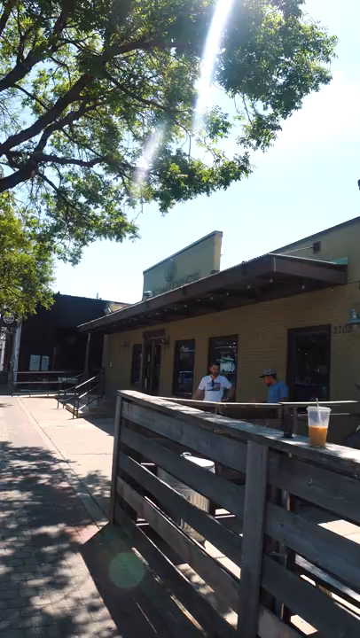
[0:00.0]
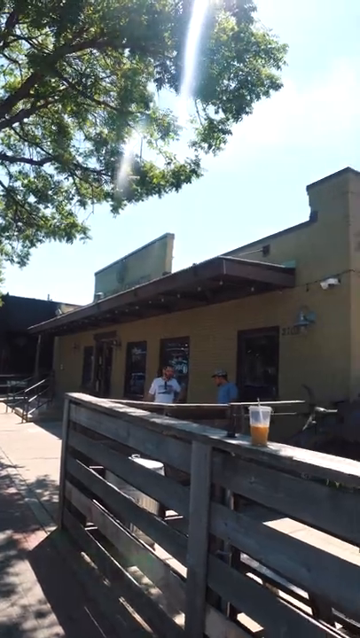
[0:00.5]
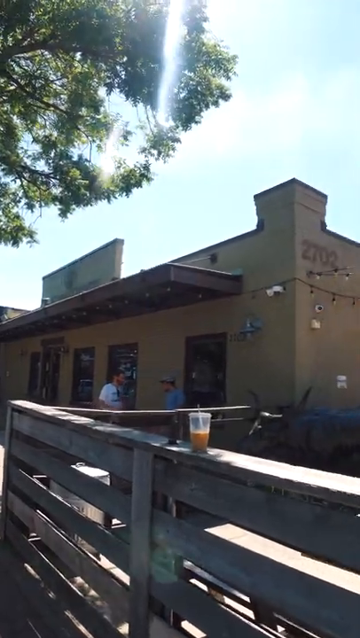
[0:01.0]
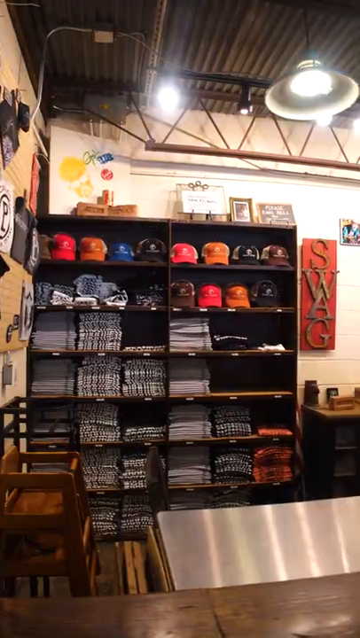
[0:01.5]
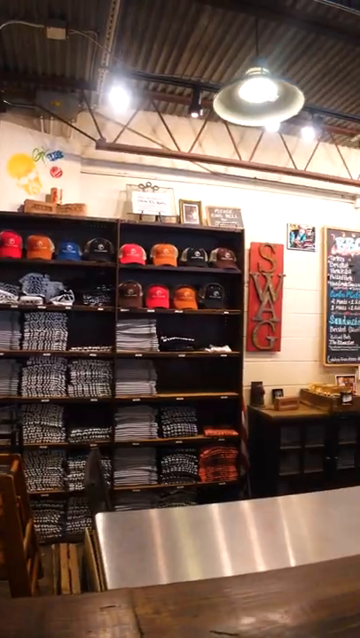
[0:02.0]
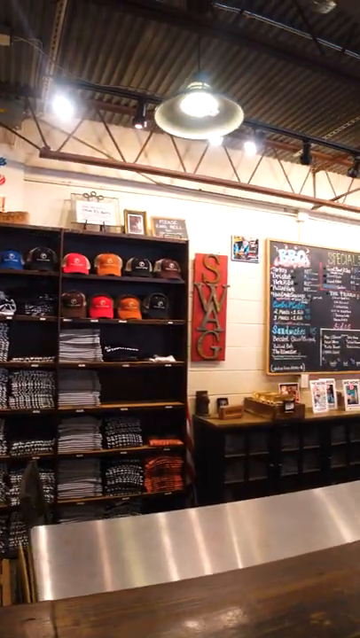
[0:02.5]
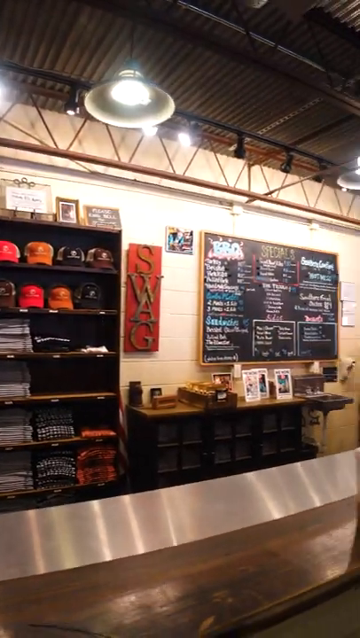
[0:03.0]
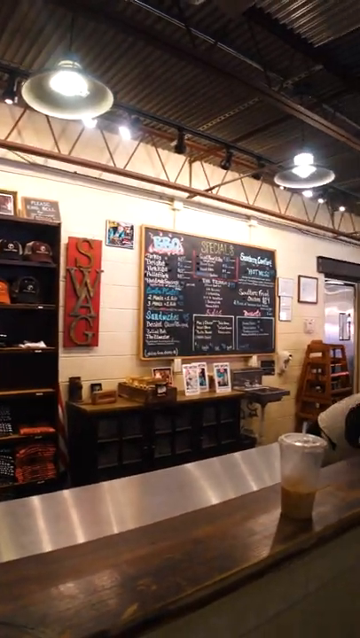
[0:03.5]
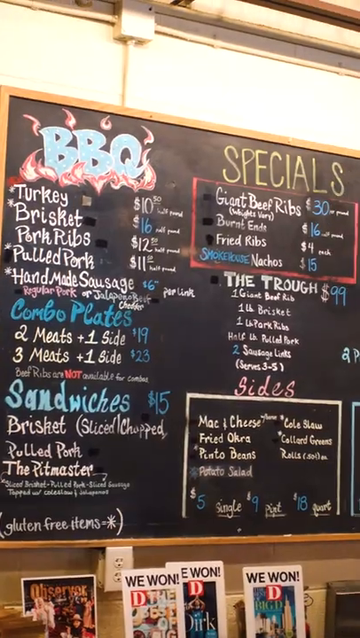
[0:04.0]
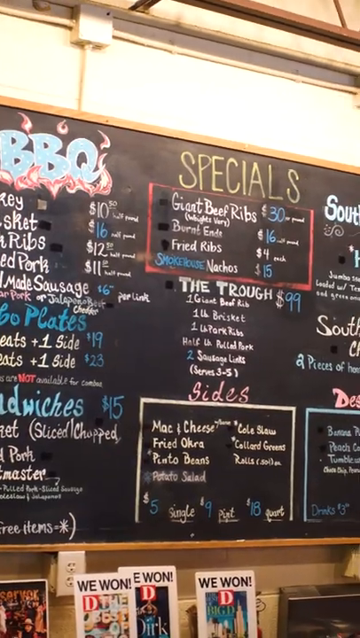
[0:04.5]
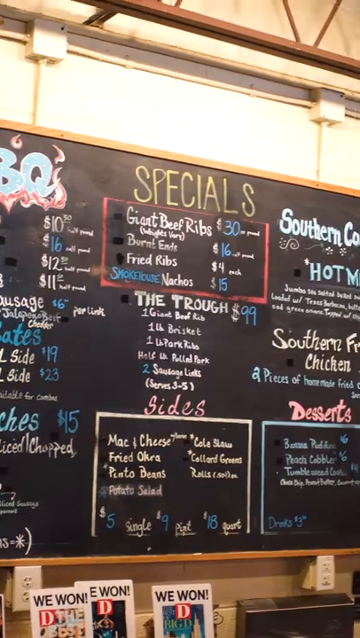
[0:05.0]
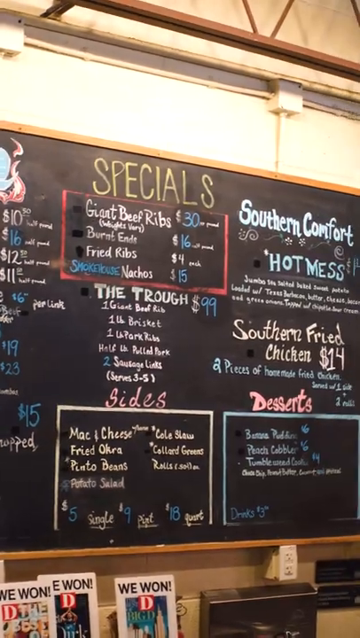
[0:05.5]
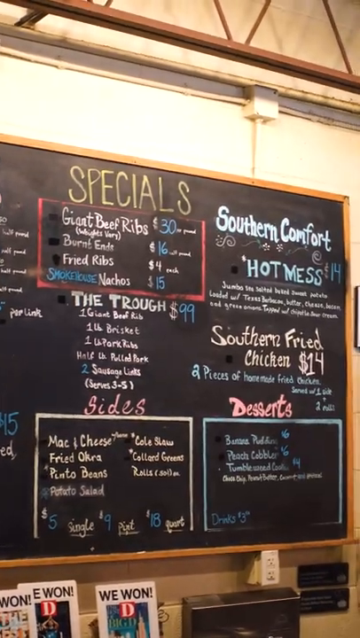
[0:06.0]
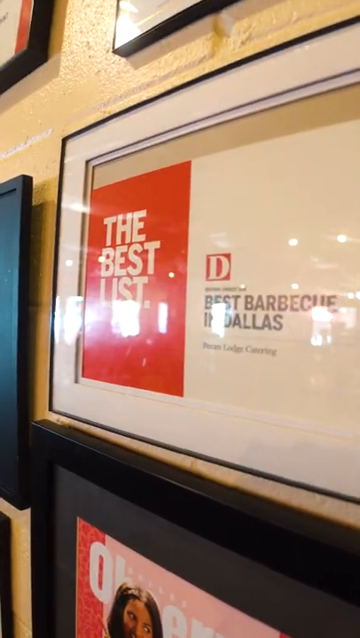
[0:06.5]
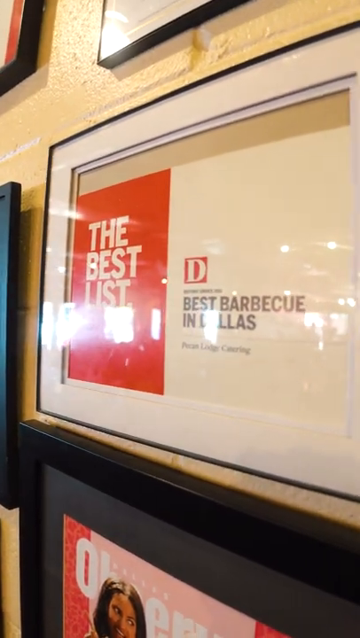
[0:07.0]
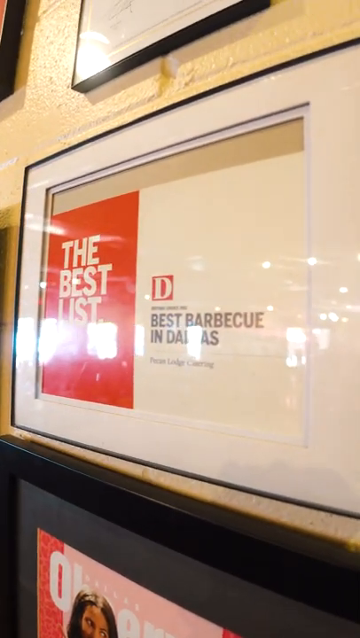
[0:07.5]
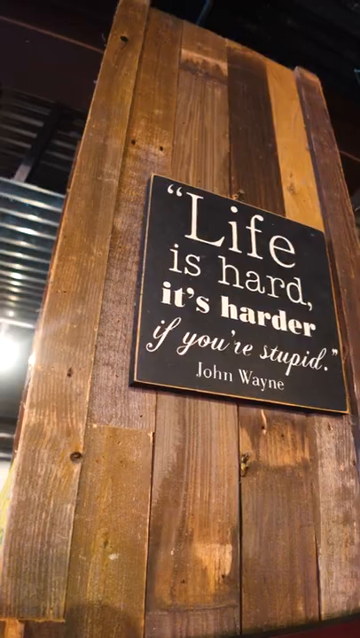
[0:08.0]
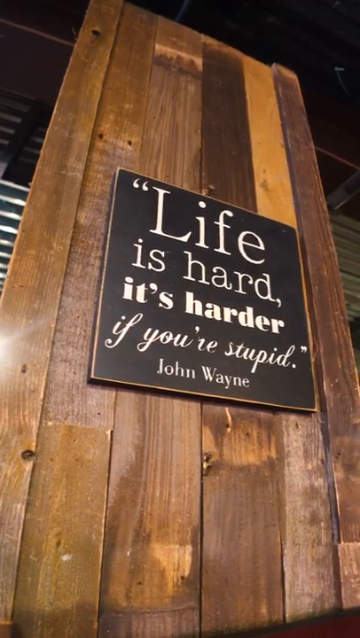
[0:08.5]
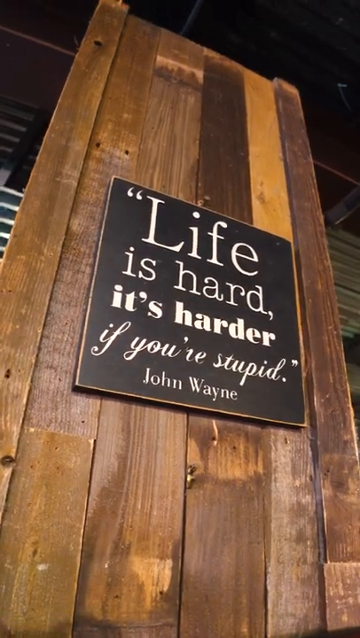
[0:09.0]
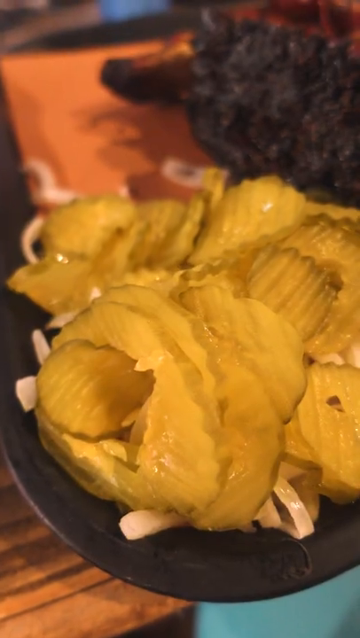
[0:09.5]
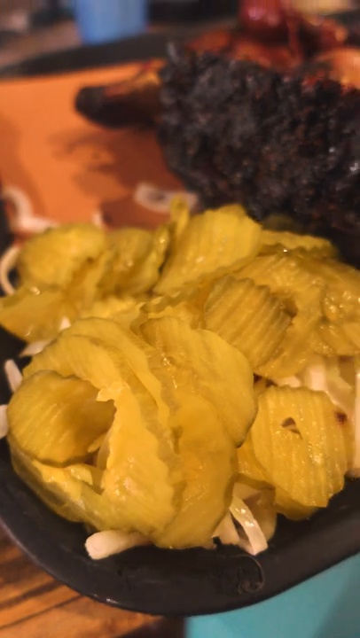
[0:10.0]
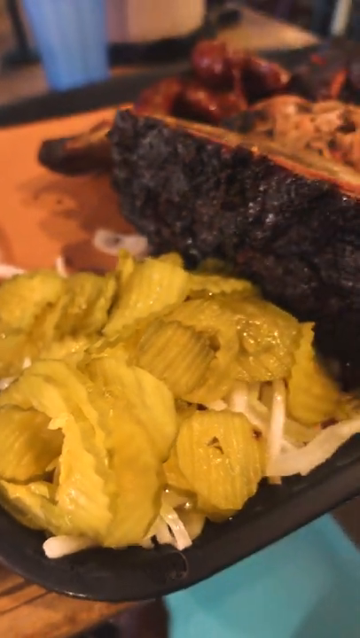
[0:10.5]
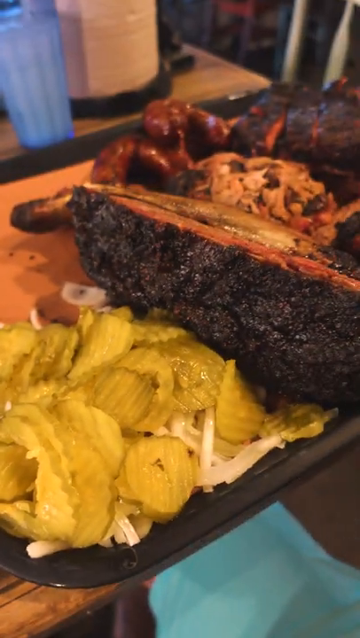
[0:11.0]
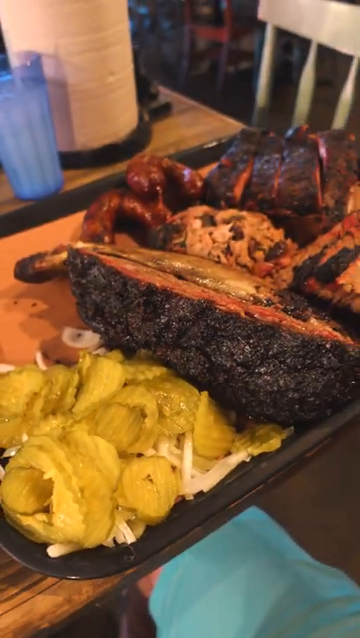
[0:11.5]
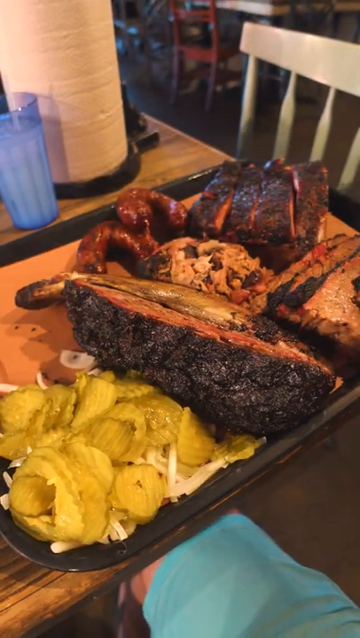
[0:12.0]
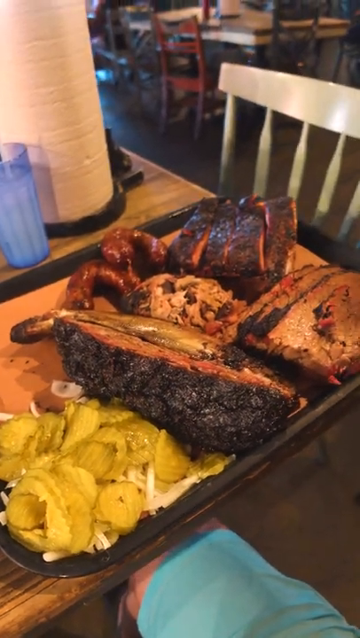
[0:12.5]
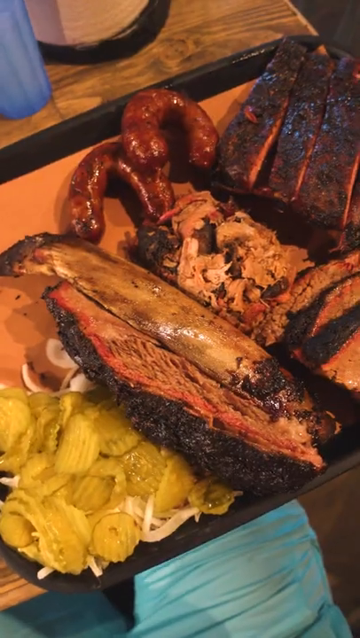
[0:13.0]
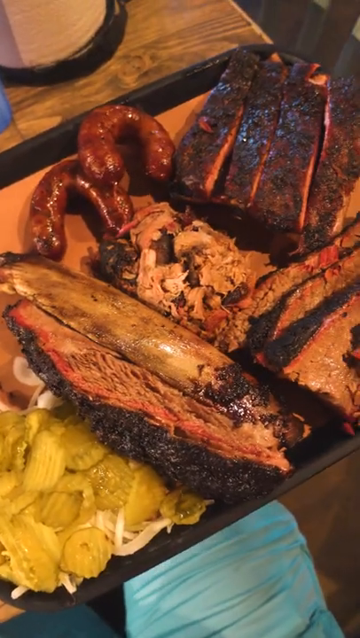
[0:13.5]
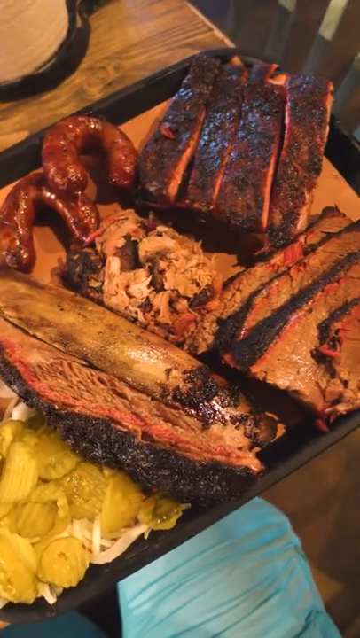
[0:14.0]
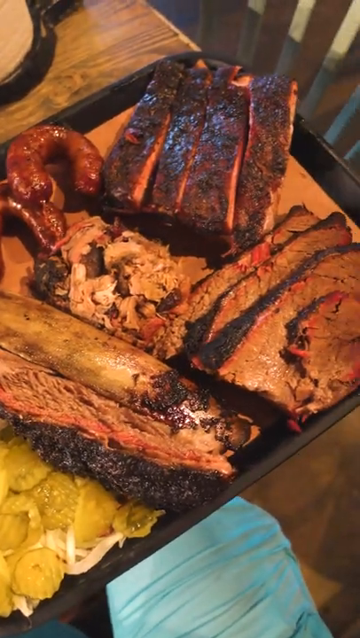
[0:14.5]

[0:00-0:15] Outside a restaurant, the address 2702 is visible. Inside, there is a shelf with hats and clothing, a three-dimensional sign that says "SWAG", and a handwritten chalkboard menu. The view focuses on the menu, which lists items including turkey, brisket, pork ribs, pulled pork, combo plates, sandwiches, specials, giant beef ribs, sides, southern comfort and hot mess. A framed sign says "the best barbecue in Dallas", so it is a barbecue restaurant. Another sign reads "life is hard, it's harder if you're stupid", attributed to John Wayne. Next comes a plate of food: a close-up of pickles with something underneath that looks like onions; the lighting makes the pickles look somewhat yellow. The camera zooms out and across to show a big smoked brisket, two sausages and some other meats that are hard to identify, possibly brisket barbecue. Behind the tray of food is a chair, and on the table next to the tray is a transparent blue plastic cup with a drink in it and possibly a straw, plus a roll of paper towels. Another shot from above shows the food on the plate: pickles and onions, brisket, something that looks like a bone, two sausages and possibly more brisket. Very briefly, a different tray of food appears, with what looks like a baked potato and two paper trays holding something unidentified, possibly macaroni and cheese.